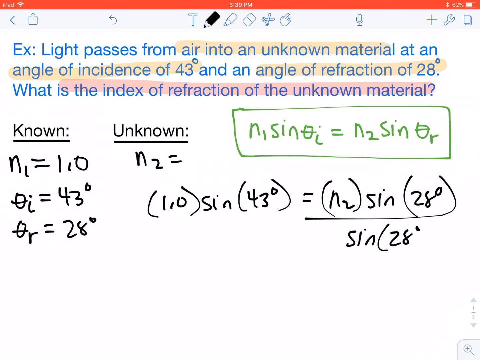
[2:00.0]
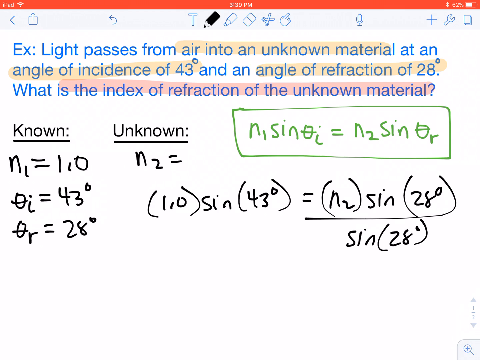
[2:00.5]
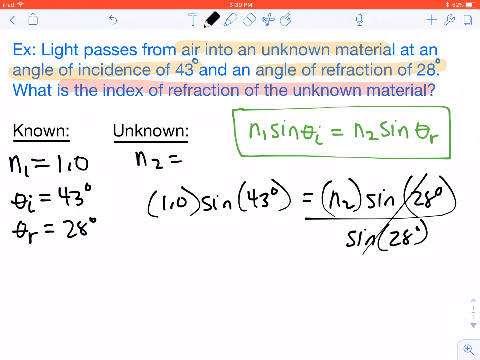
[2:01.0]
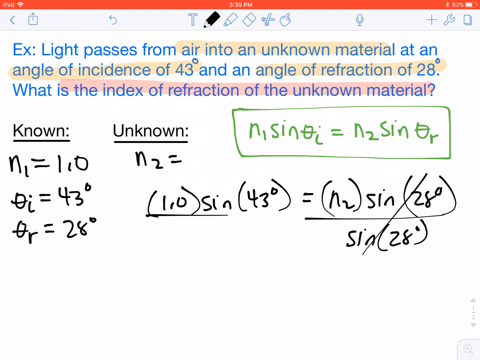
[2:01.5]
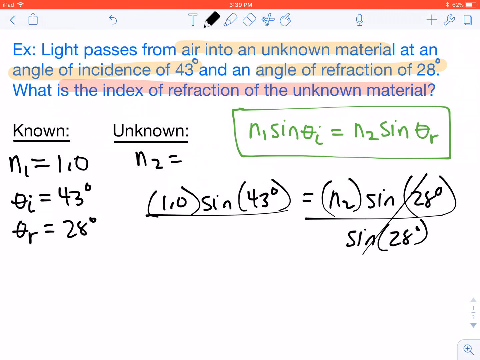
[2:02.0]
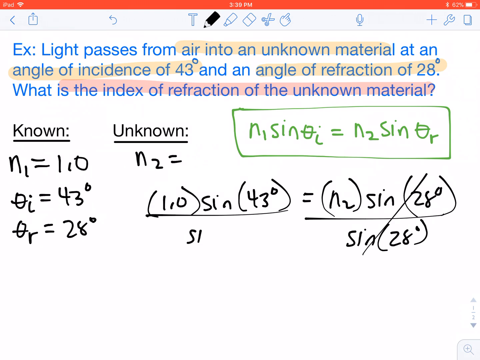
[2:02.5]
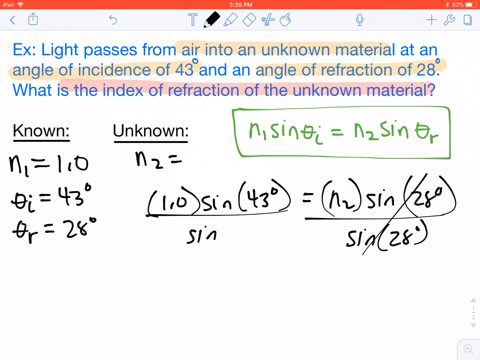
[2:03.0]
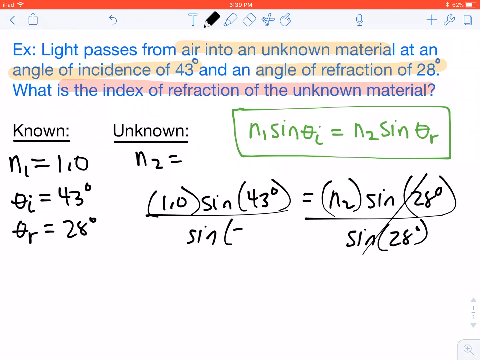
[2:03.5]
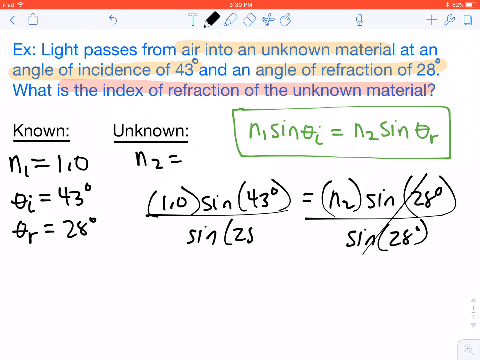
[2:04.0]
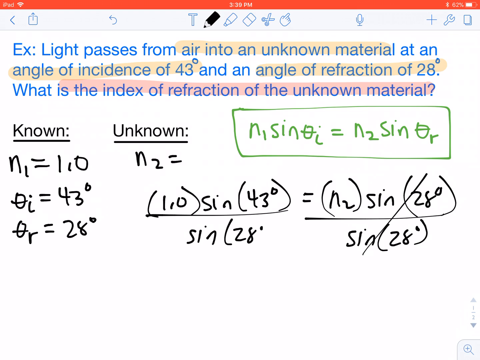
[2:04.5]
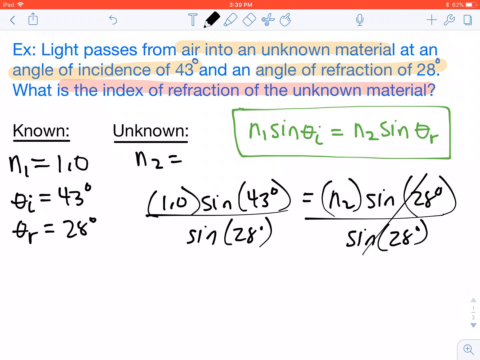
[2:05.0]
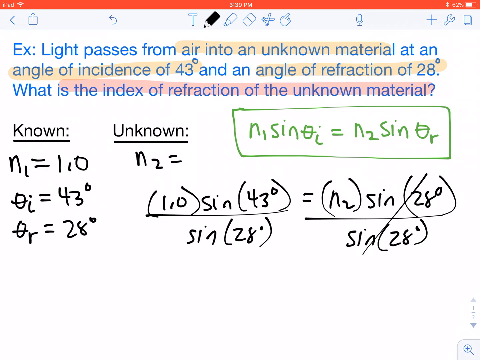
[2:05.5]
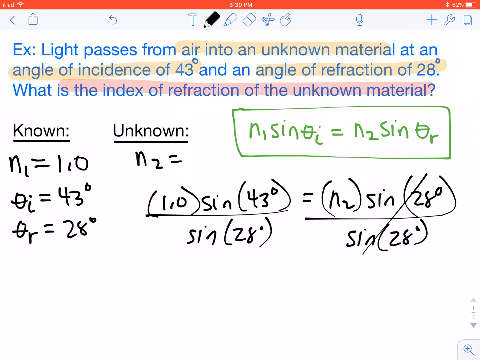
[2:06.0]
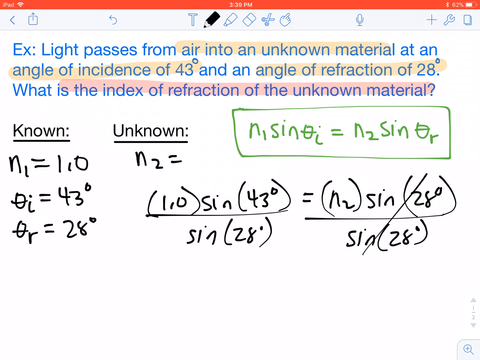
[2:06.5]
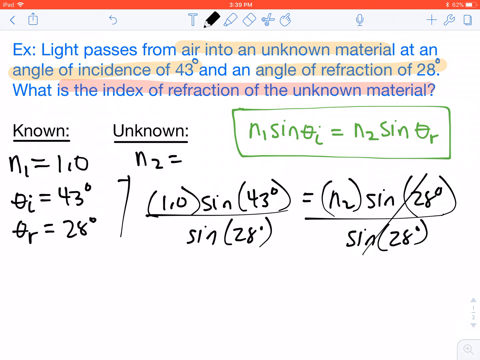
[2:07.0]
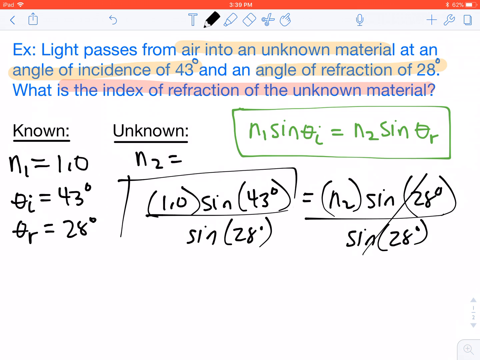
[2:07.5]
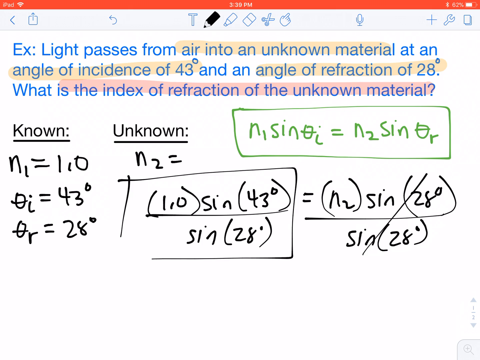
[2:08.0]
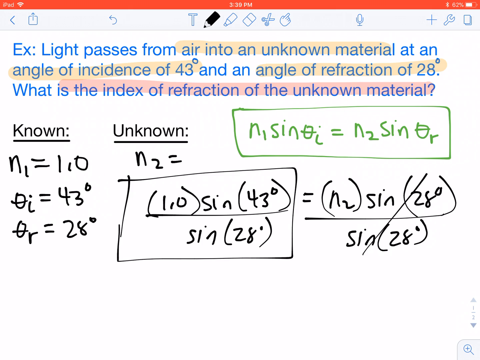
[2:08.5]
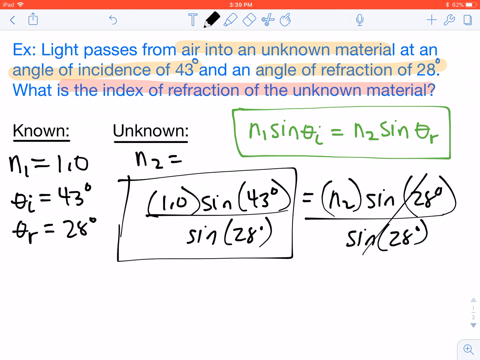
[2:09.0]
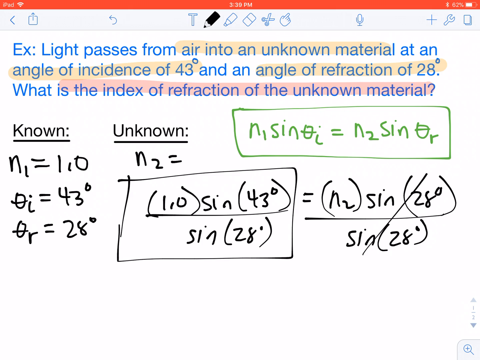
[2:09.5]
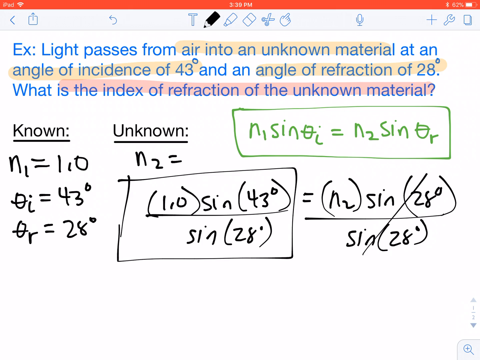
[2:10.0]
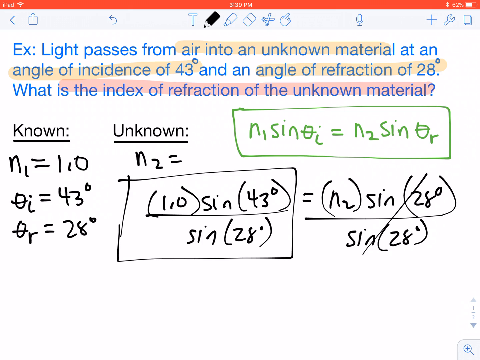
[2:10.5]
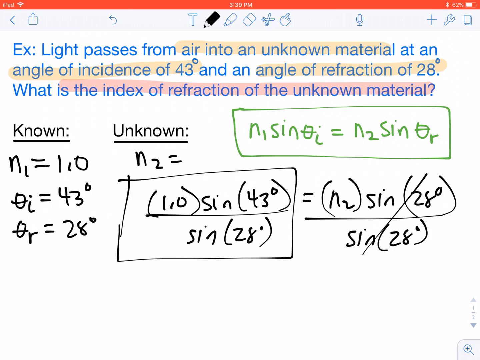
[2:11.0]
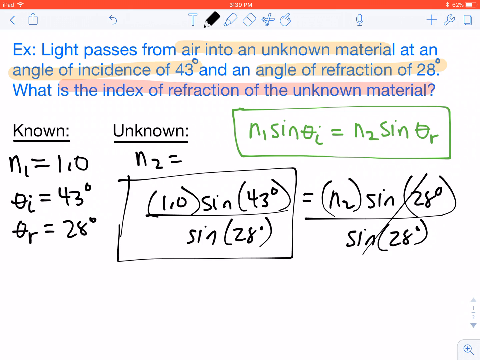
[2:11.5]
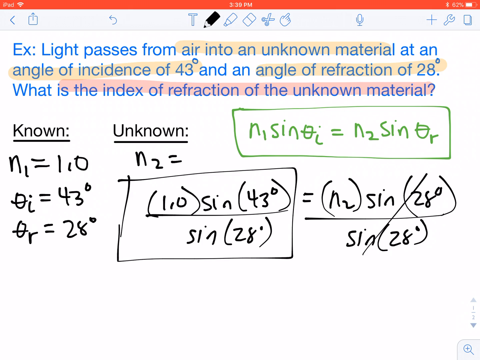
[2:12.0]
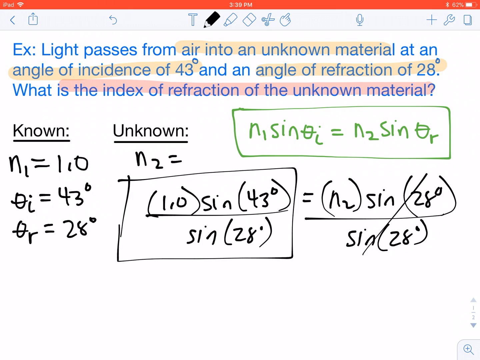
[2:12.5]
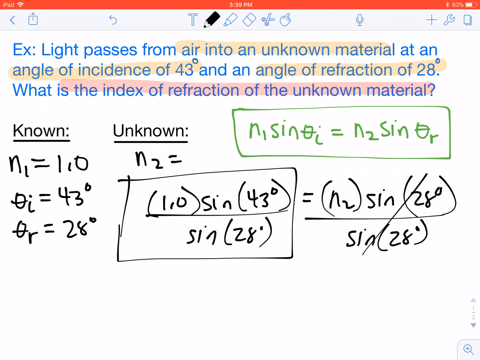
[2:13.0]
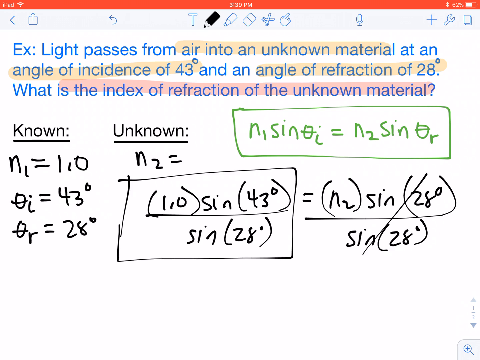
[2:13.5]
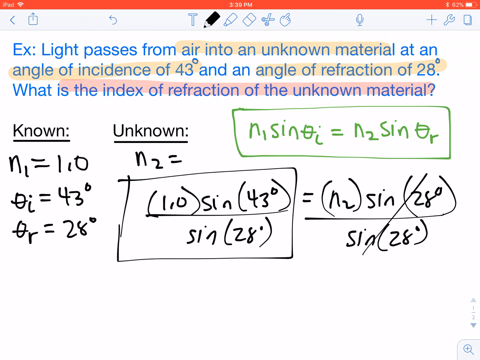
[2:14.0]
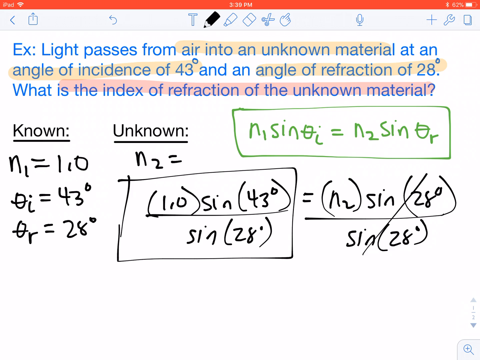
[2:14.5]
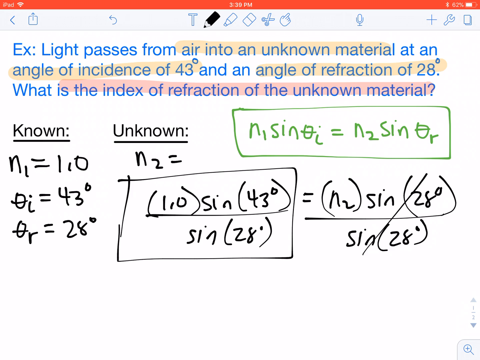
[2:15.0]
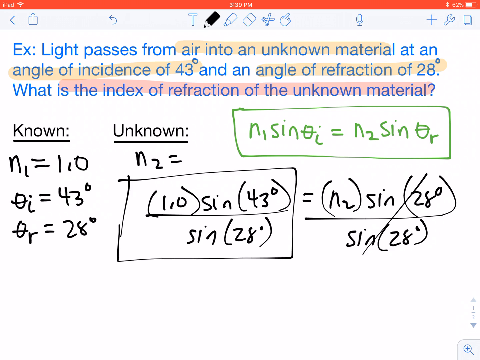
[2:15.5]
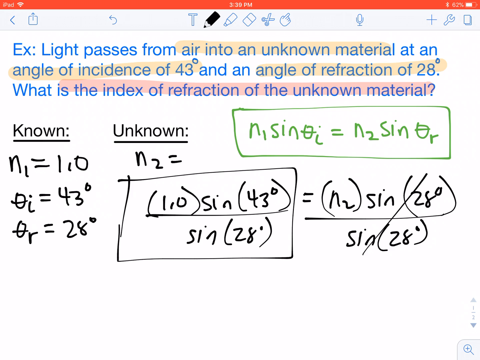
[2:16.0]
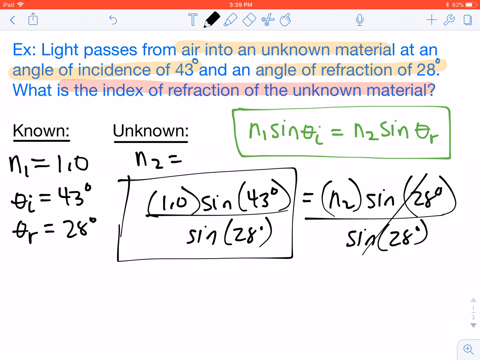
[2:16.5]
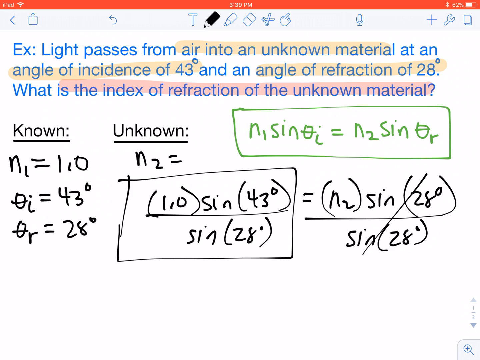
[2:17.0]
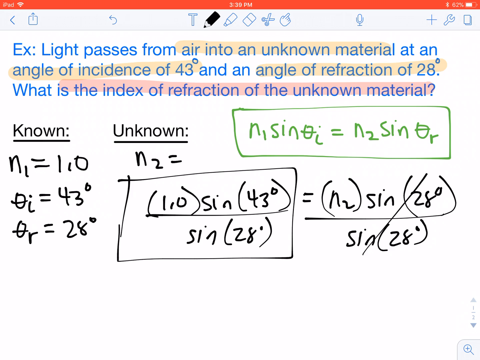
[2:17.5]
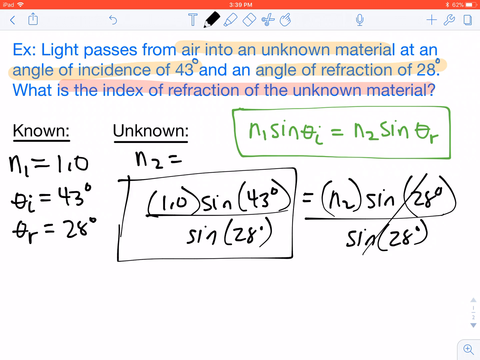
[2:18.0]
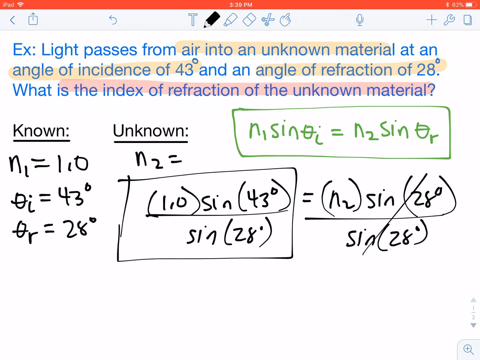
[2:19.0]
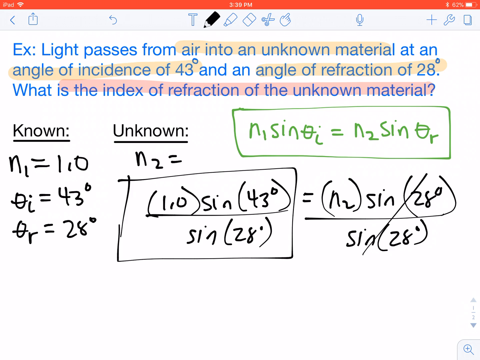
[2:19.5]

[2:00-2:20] The person has put "sin (28 degrees)" at the bottom, so the expression reads "LIO sin (43 degrees)" divided by "sin (28 degrees)", and they circle it in a square, apparently marking it as the final answer. The time at the very top appears to read 3:30 p.m. The software looks very basic, and the computer appears to be a Mac, with the battery power shown at the top right and the wi-fi symbol at the top left.